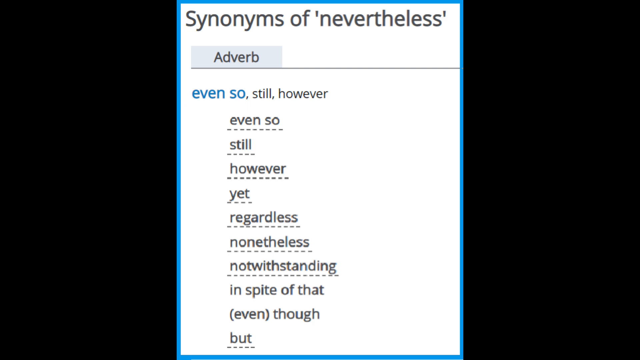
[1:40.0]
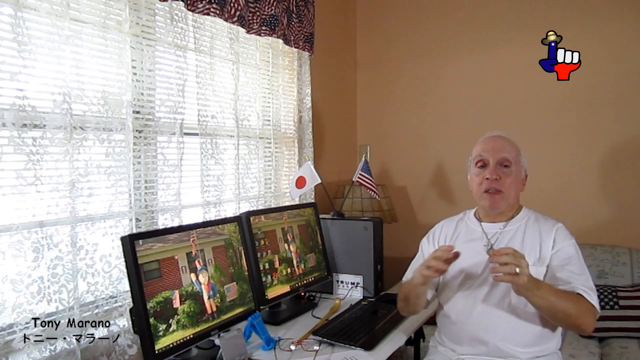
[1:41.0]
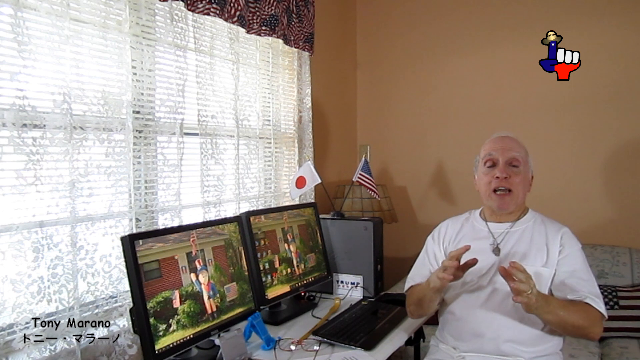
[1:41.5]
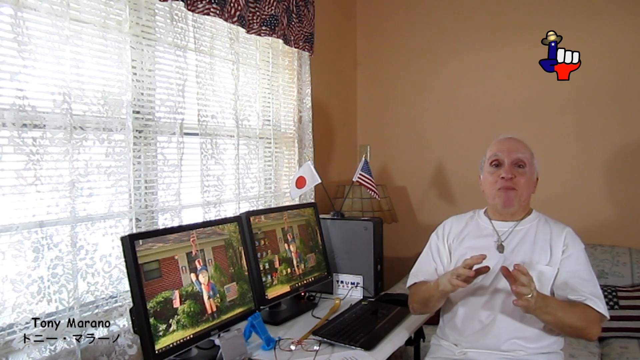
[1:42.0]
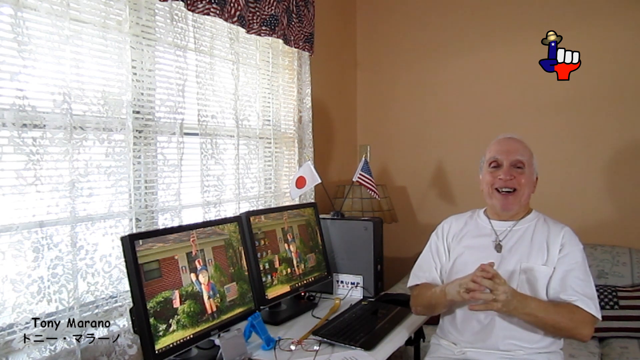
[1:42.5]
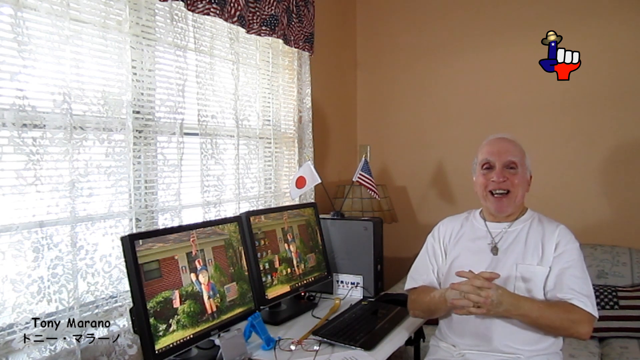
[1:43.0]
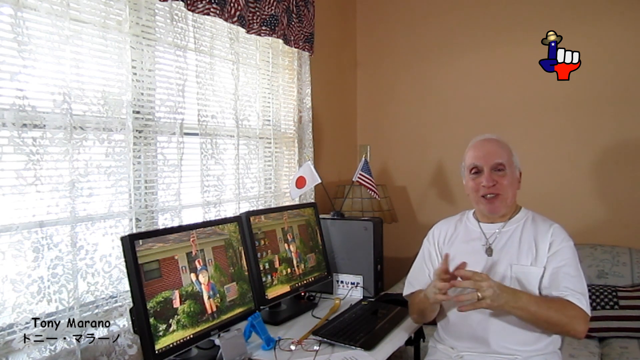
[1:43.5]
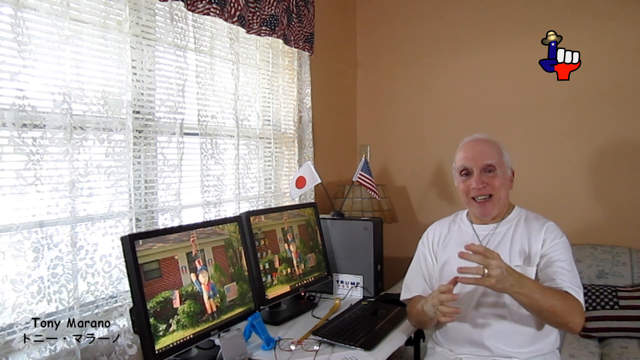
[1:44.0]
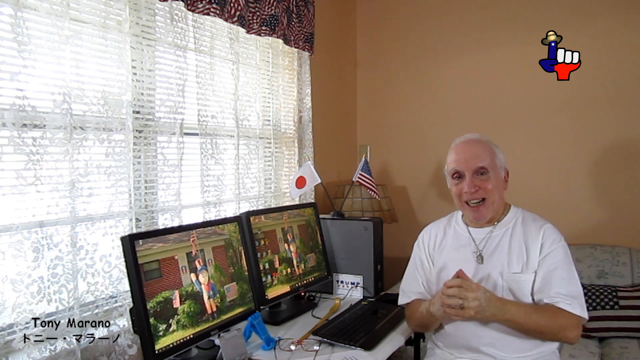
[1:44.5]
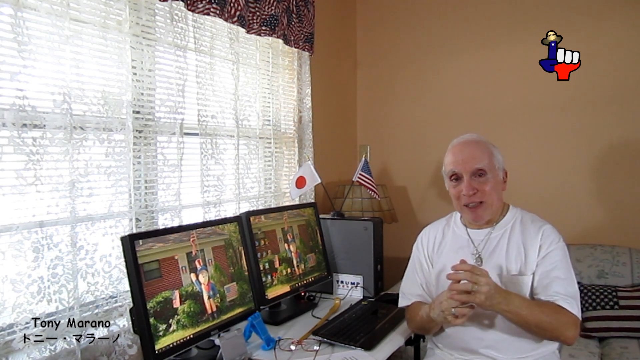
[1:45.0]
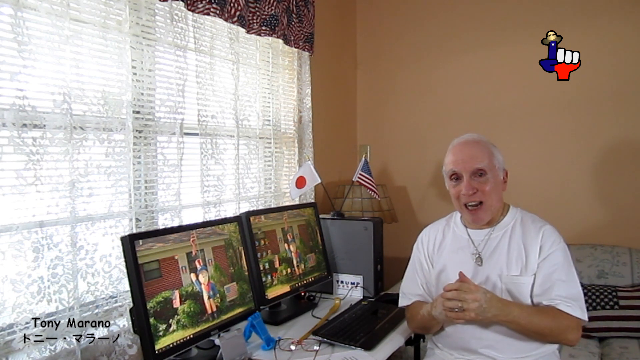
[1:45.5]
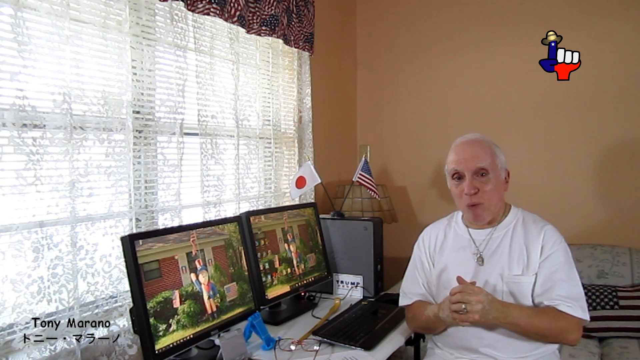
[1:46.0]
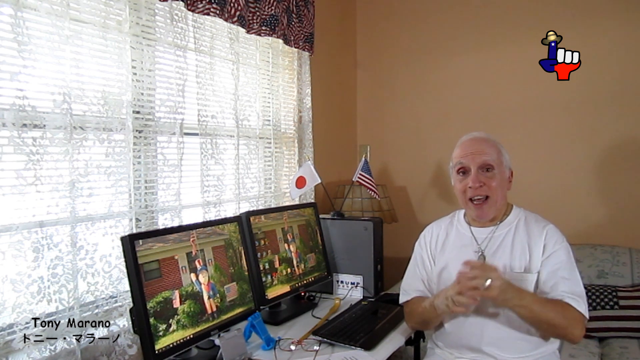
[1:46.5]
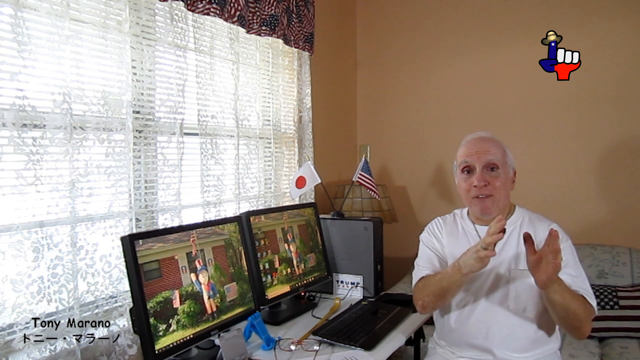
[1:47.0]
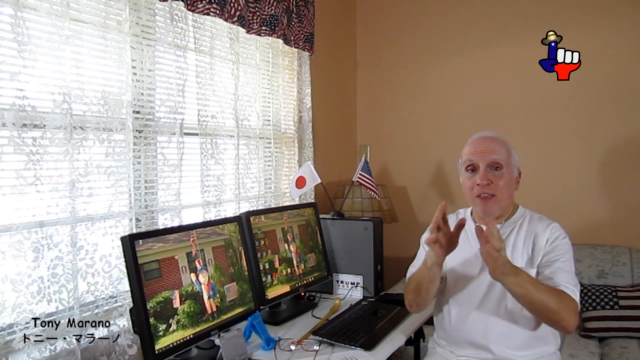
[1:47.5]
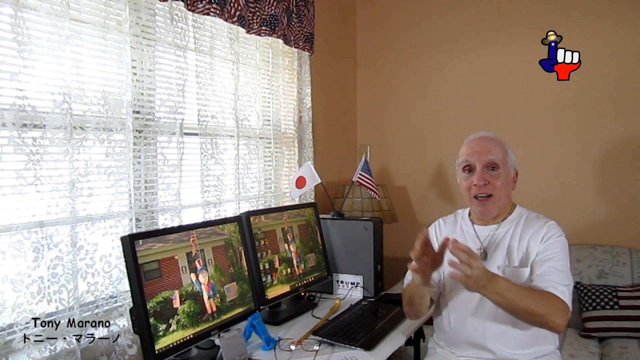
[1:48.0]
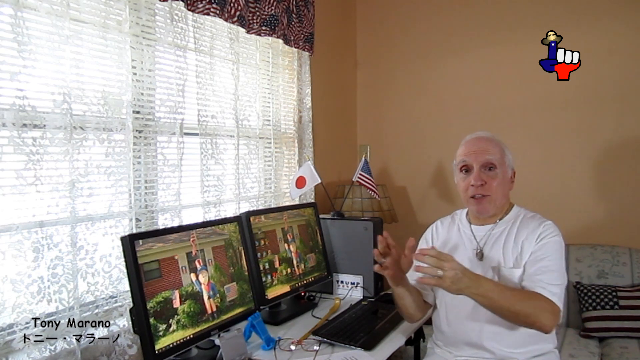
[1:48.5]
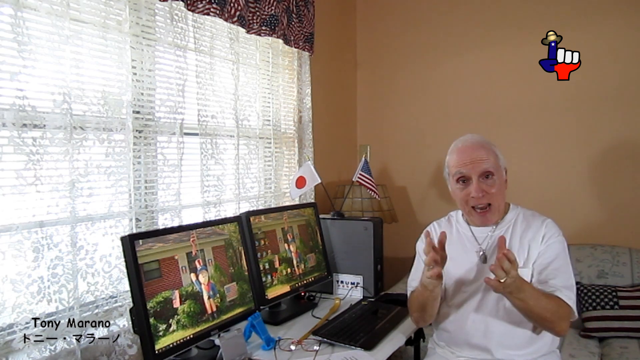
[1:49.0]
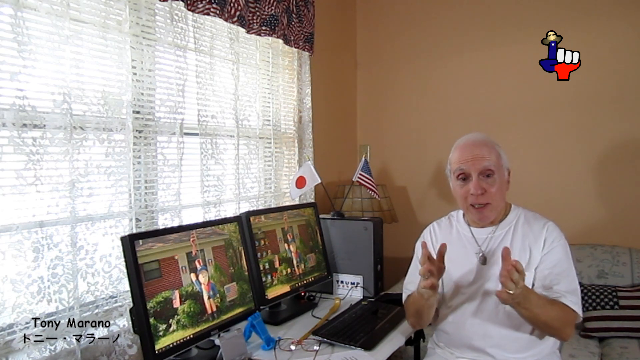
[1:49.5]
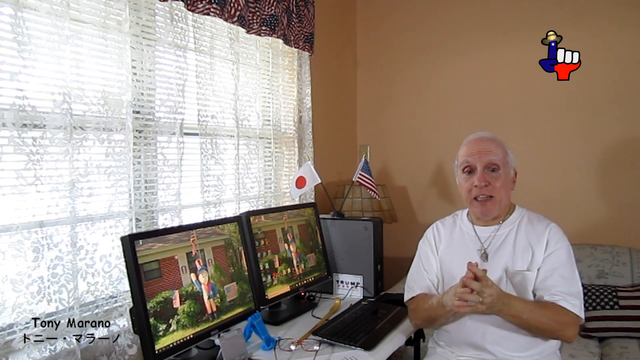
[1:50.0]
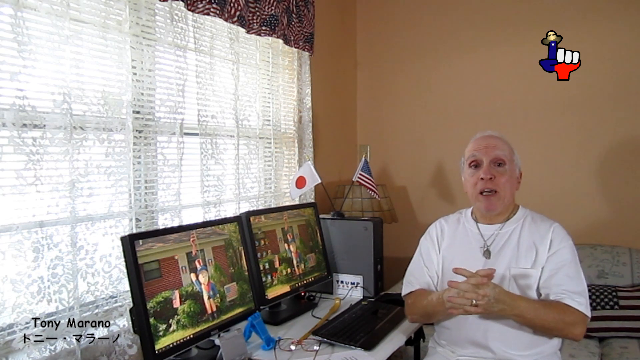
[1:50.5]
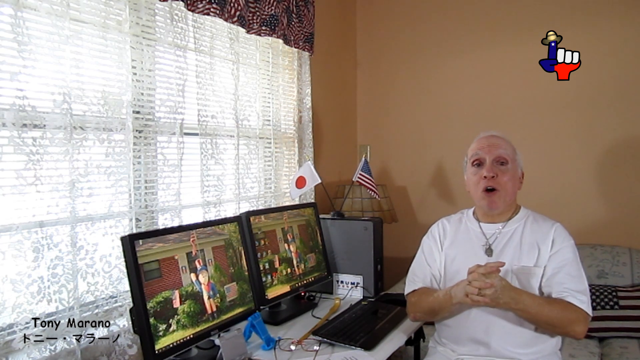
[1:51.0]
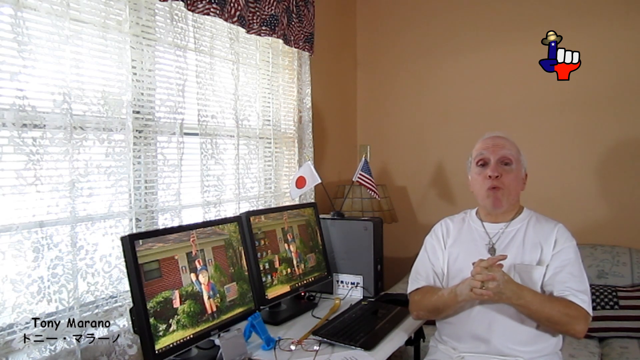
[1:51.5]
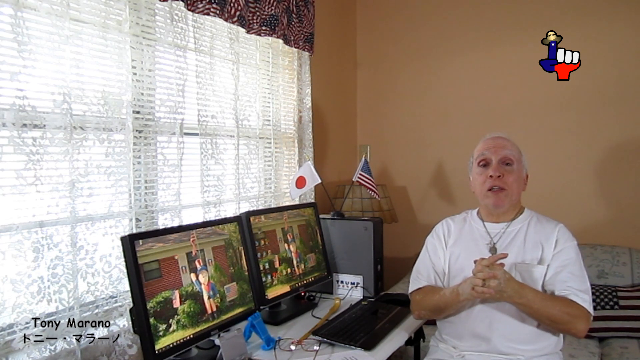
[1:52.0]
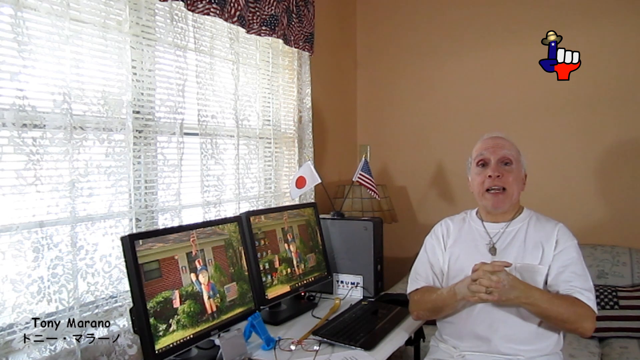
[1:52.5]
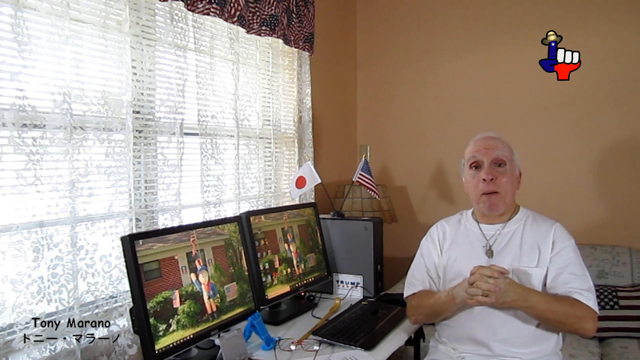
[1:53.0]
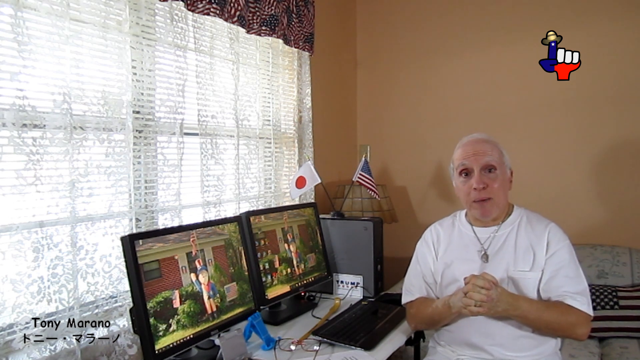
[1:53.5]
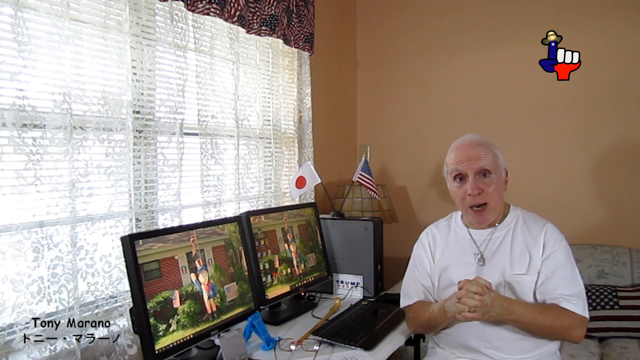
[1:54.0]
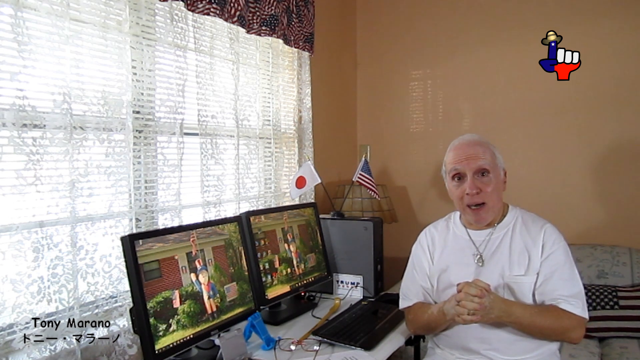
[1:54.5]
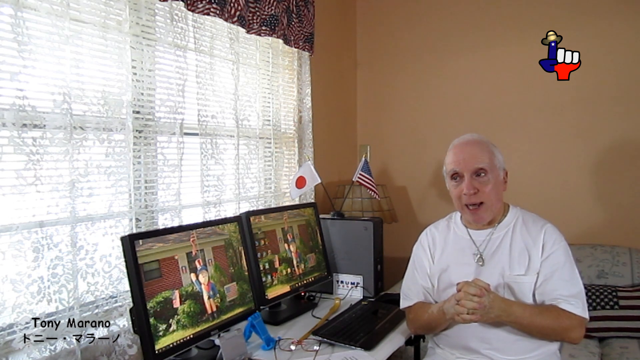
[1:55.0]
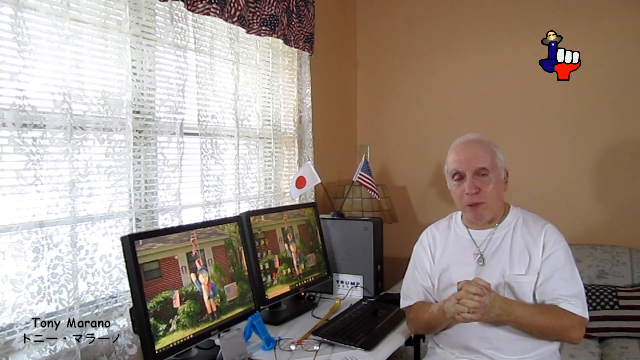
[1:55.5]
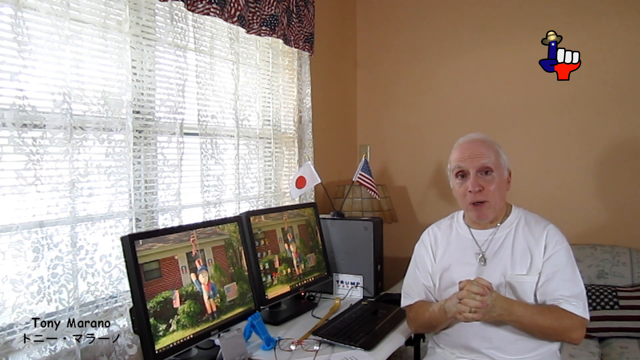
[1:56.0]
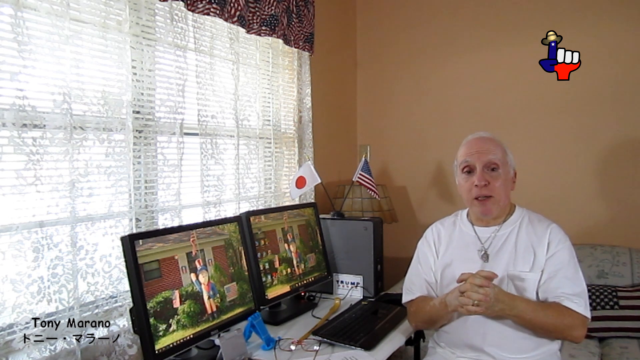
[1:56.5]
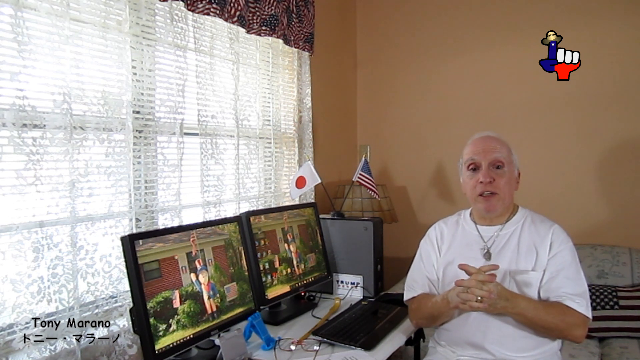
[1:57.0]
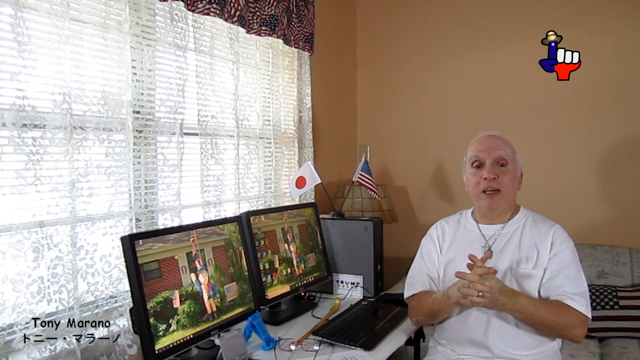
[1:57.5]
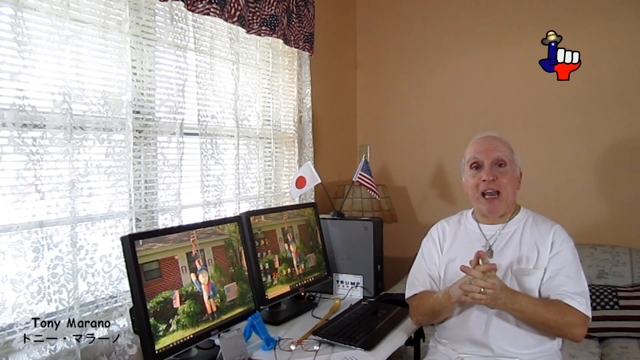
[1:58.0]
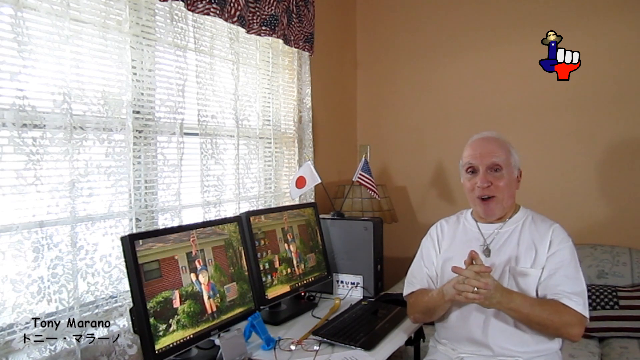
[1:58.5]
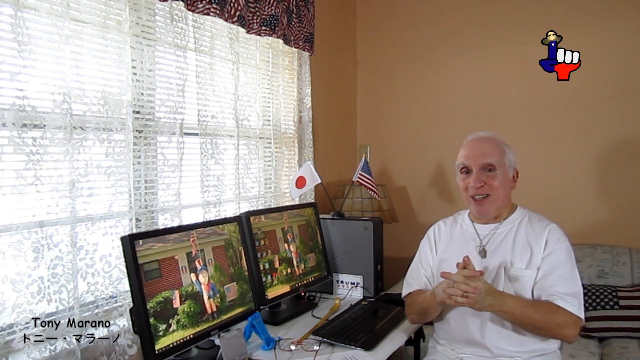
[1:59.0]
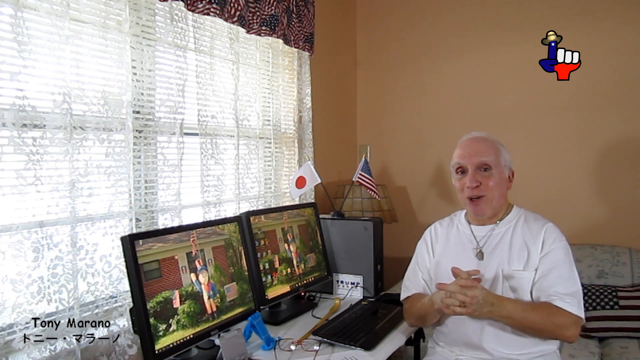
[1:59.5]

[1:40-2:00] A man sits on the right side of the screen, facing the camera and speaking directly into it. He has short white hair and wears a short-sleeved white shirt and a necklace with a charm on it. To his right is a white desk with two desktop monitors side by side and just one keyboard in front of one of them. To the right of that, also on the desk, is the desktop tower with two little flags on top, a China flag and a United States flag. Behind the desk is a large picture window with a see-through curtain, through which a blind can be seen running from the top of the window all the way to the bottom. In the bottom right-hand corner, black text reads "Tony Marano." Behind him there is only a light brown wall.